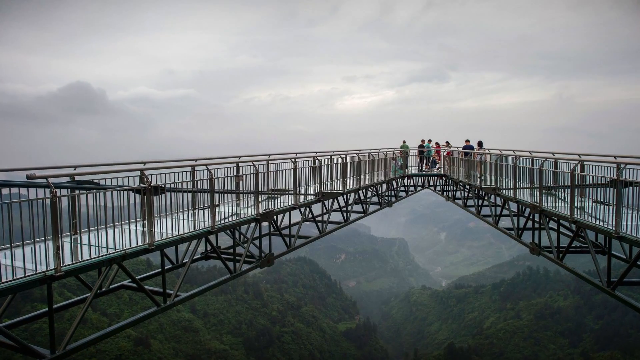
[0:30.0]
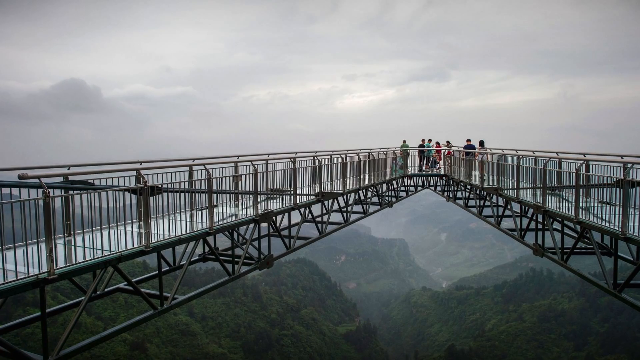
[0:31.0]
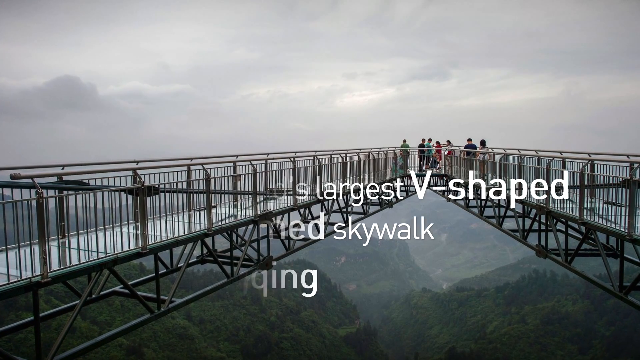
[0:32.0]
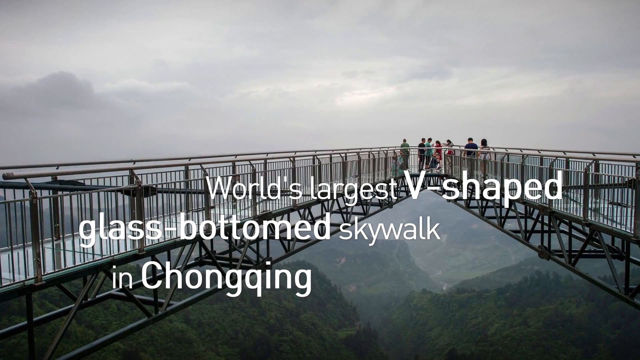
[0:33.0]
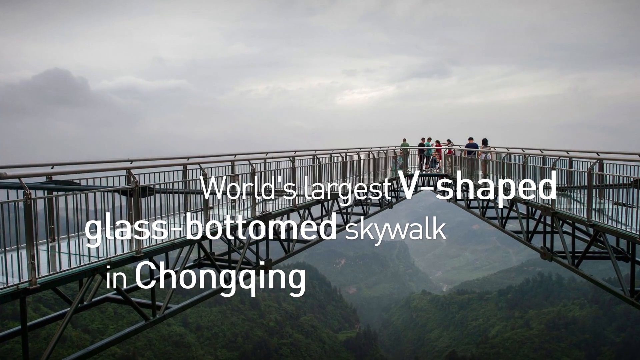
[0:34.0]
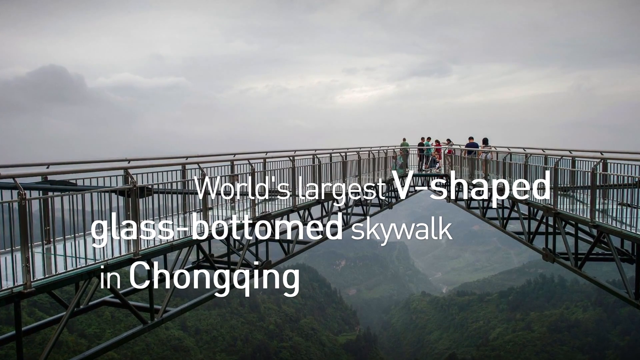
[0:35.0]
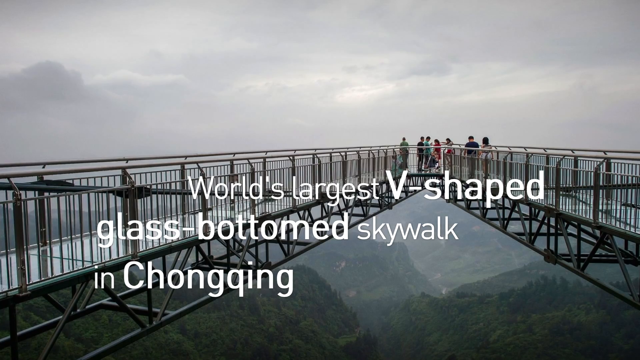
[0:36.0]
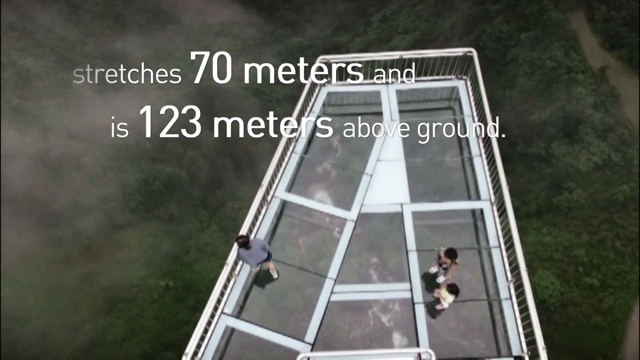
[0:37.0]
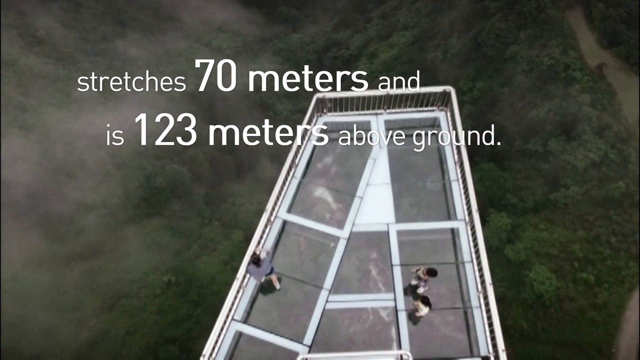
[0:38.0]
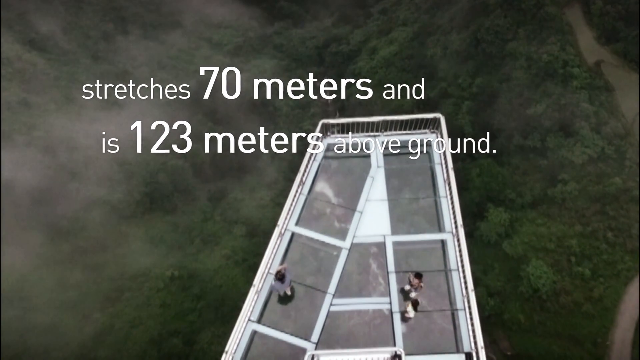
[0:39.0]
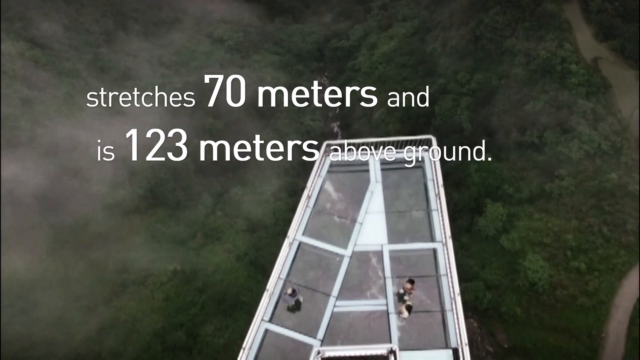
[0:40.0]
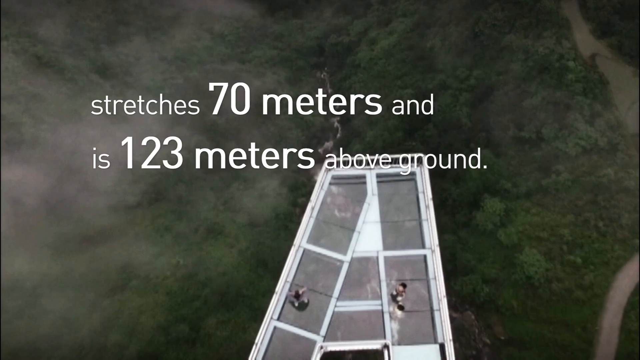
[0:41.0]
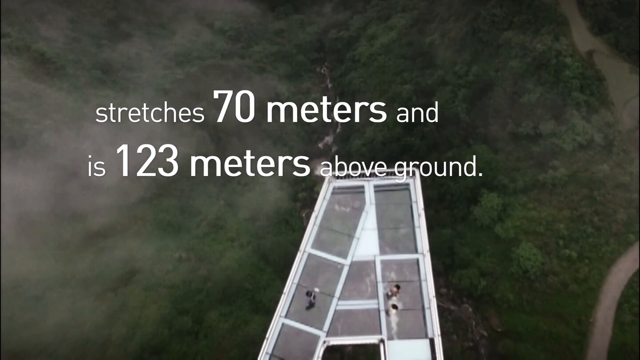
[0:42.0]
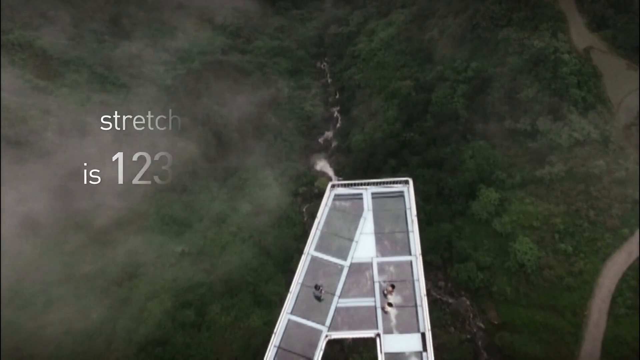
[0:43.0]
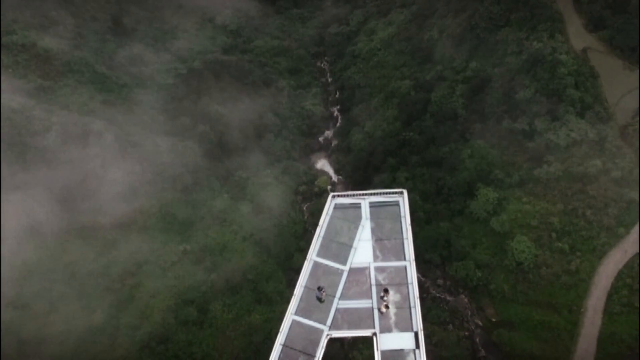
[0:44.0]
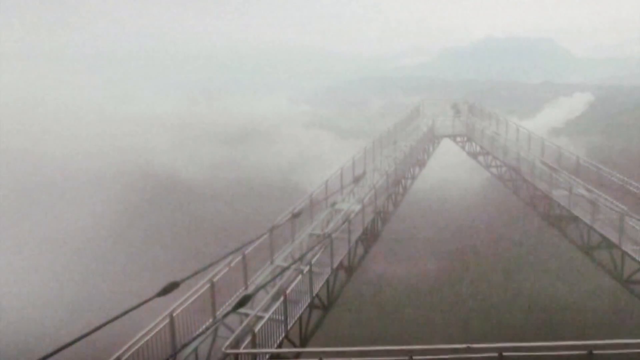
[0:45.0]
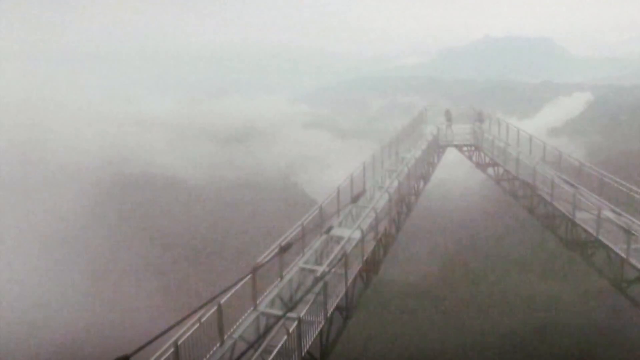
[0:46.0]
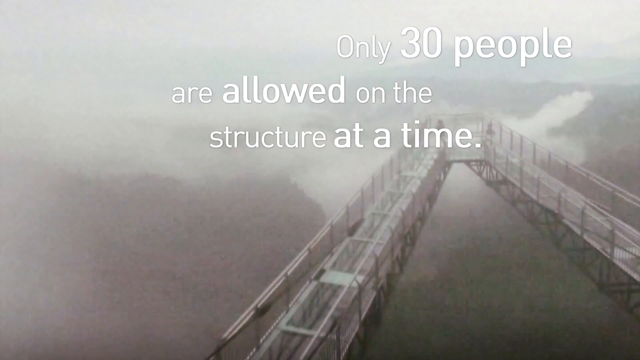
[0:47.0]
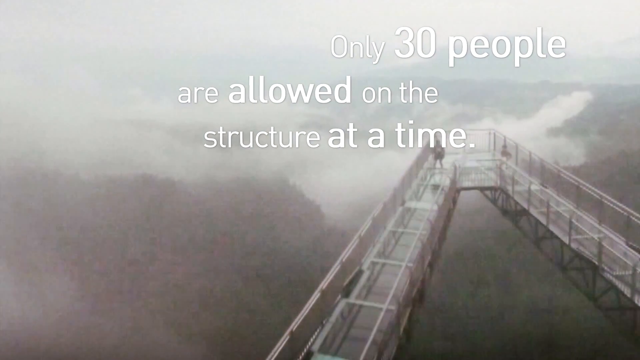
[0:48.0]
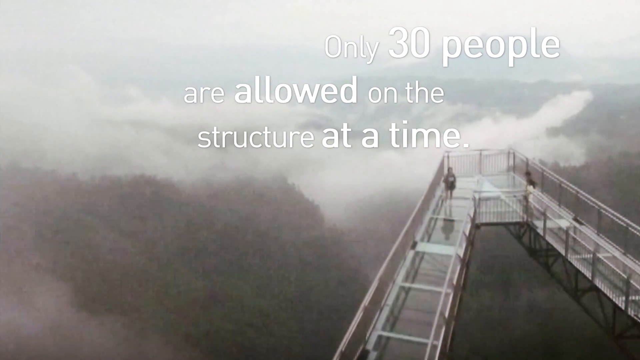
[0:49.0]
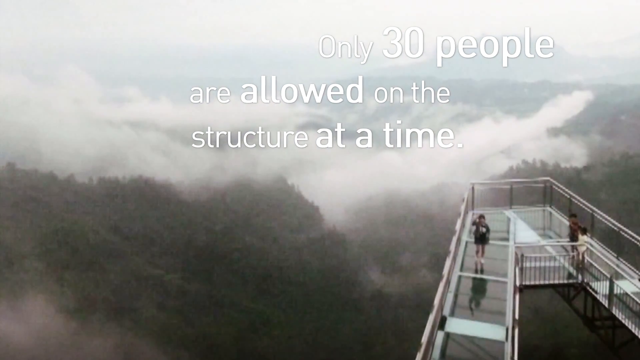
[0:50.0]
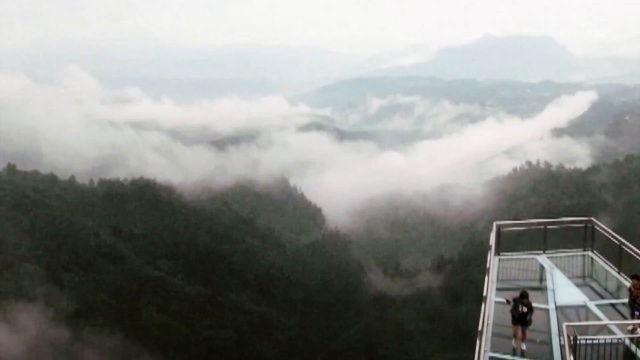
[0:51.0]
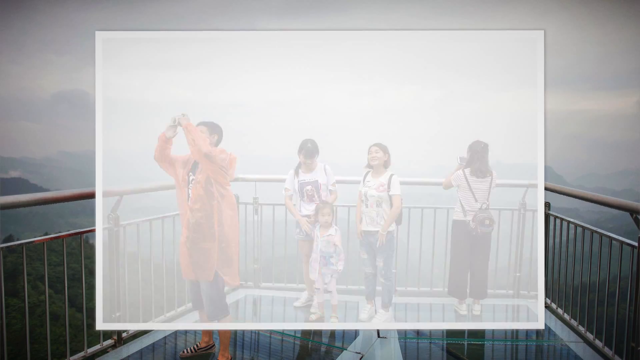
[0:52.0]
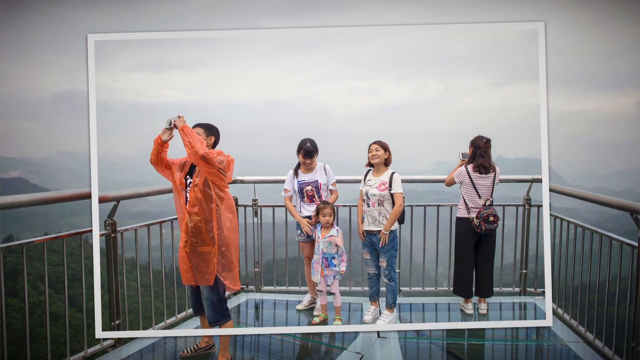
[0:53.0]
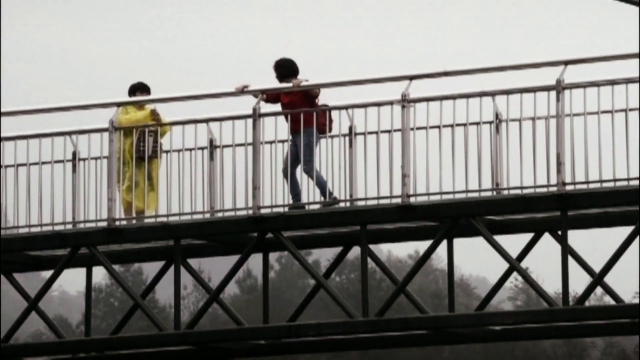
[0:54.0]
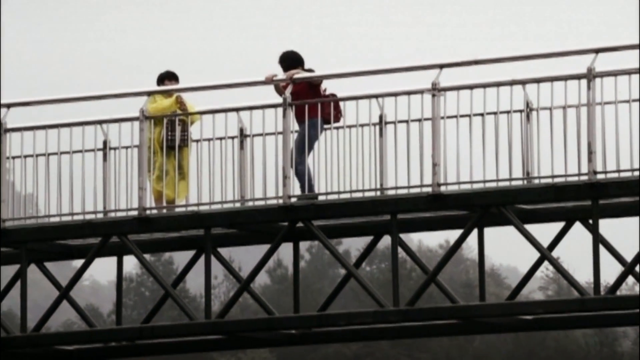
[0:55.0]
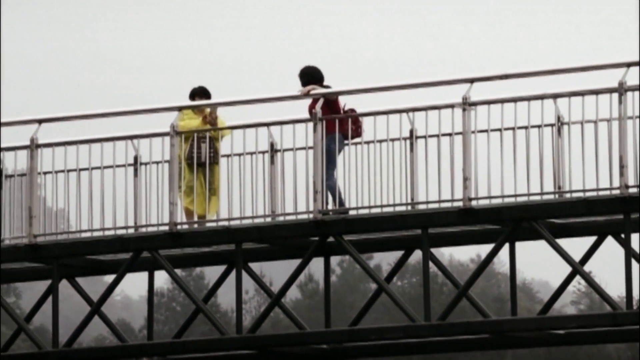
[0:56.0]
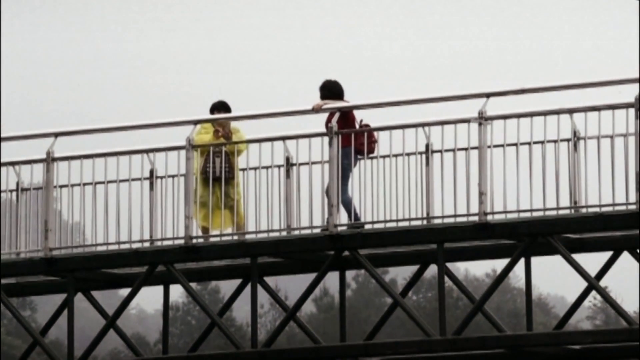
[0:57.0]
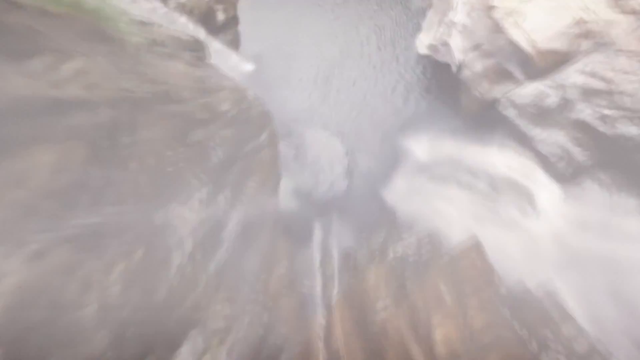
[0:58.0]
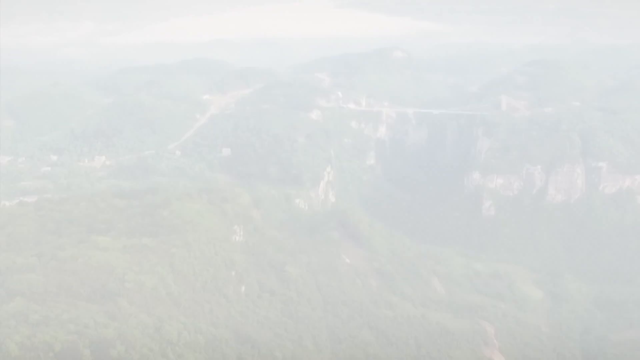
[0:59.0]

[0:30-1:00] A shot shows a bridge with people standing at its end. Below it is a sheer drop to a mountain and trees, and nothing is below the bridge holding it up. Text reads "world's largest V-shaped glass-bottomed skywalk in Chongqing." A drone shot moves to the end of the V and zooms outward, showing people standing on top of the glass structure, with a forest of trees far below; the skywalk stretches 70 meters and is 123 meters above the ground. The camera keeps moving upward, showing how far away it is. Another drone shot comes forward, showing the entire bridge, and text reads "only 30 people are allowed on the structure at a time." The camera zooms out, and as it moves, a lot of mist is visible in the trees below. What appears to be a family, seemingly five people, is shown, and one of them takes a picture of the forest.